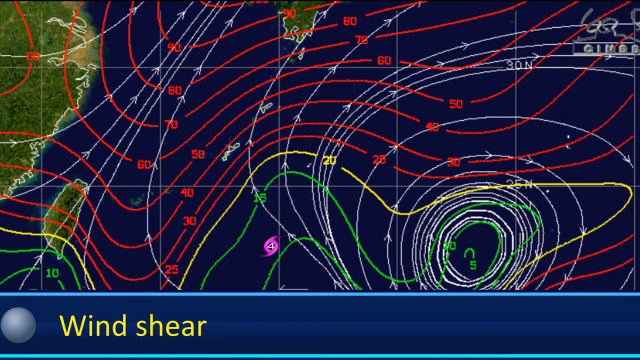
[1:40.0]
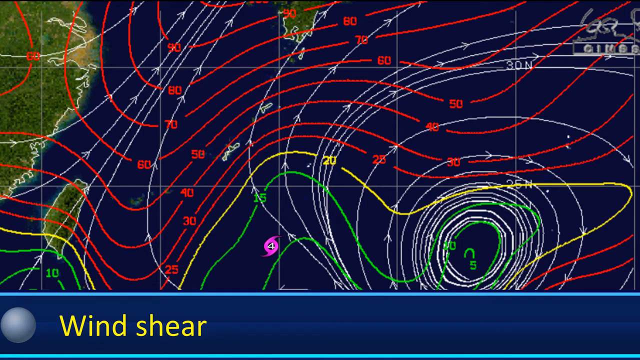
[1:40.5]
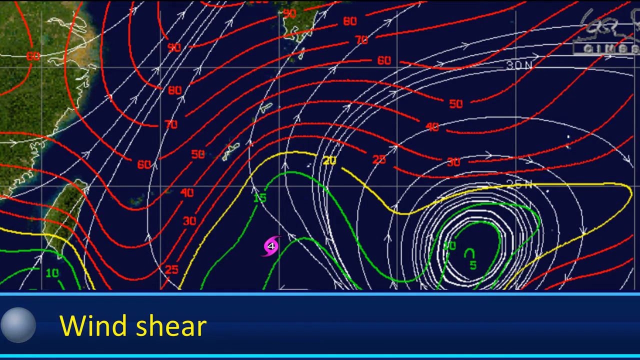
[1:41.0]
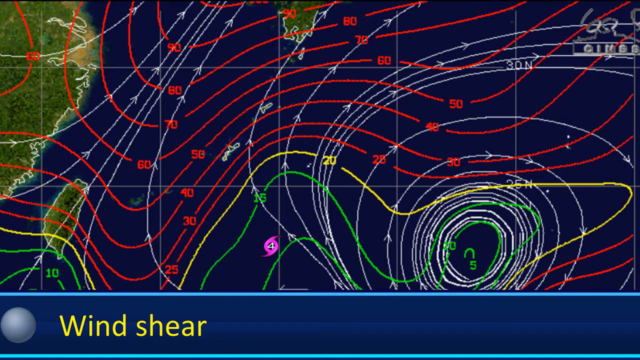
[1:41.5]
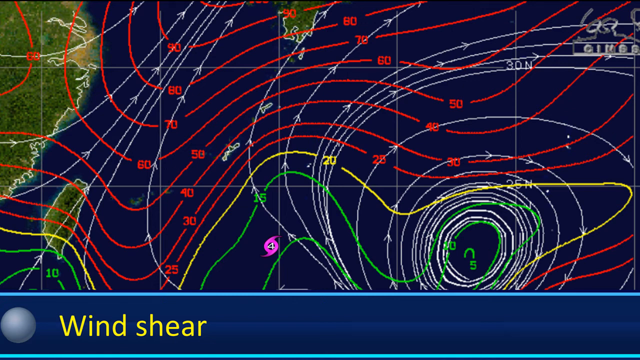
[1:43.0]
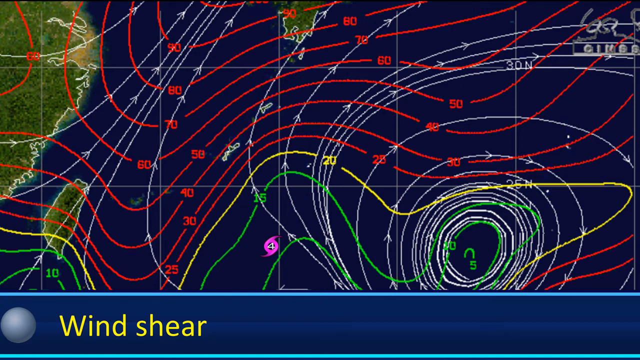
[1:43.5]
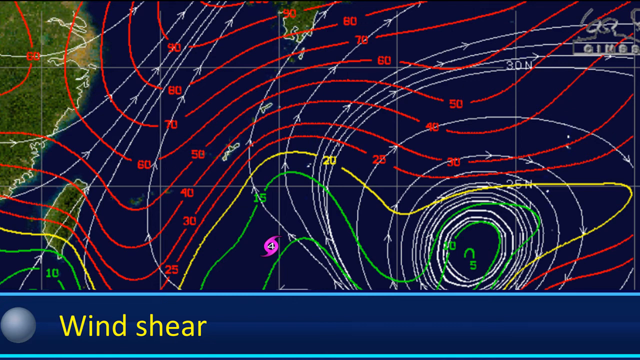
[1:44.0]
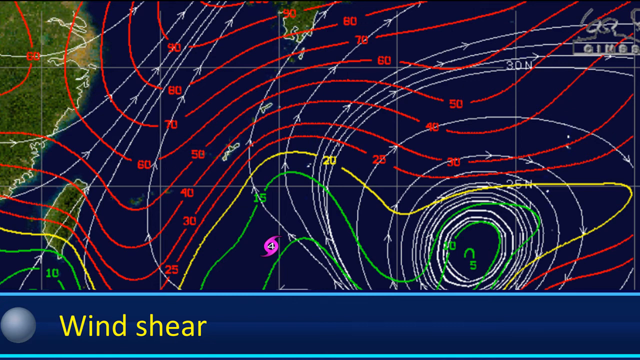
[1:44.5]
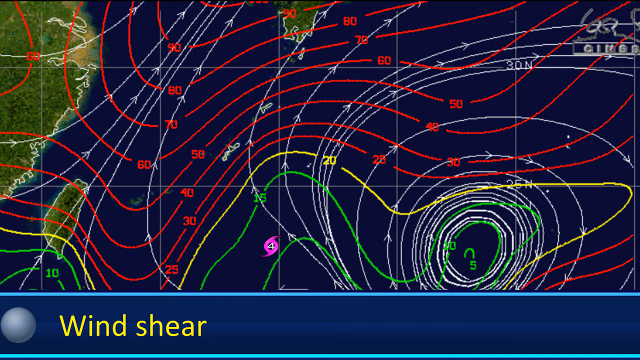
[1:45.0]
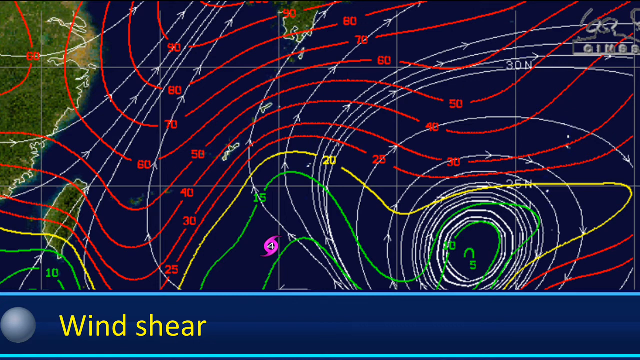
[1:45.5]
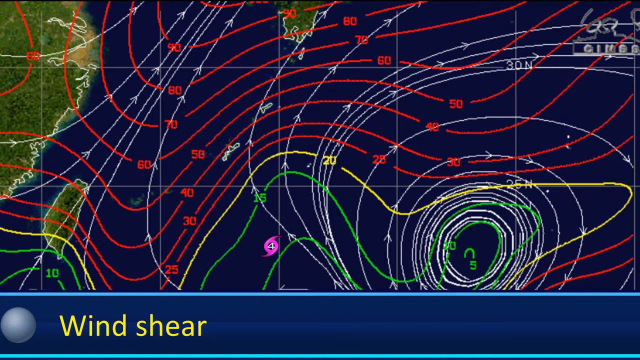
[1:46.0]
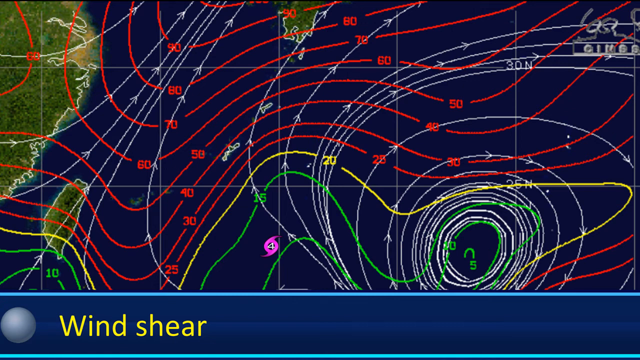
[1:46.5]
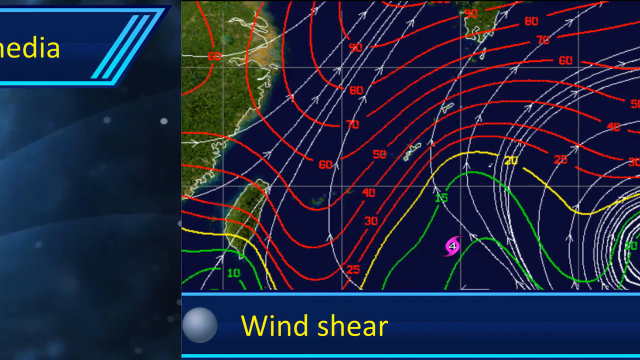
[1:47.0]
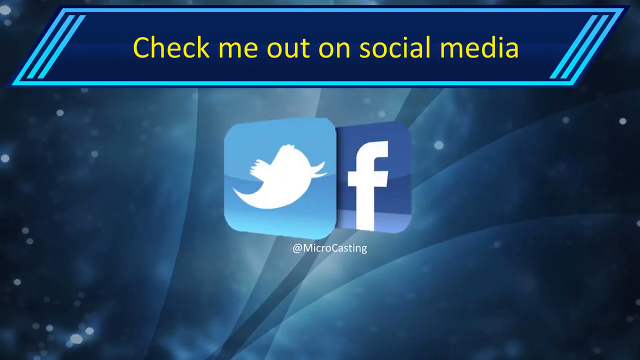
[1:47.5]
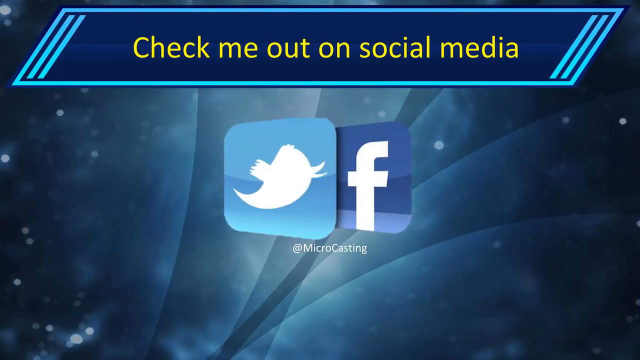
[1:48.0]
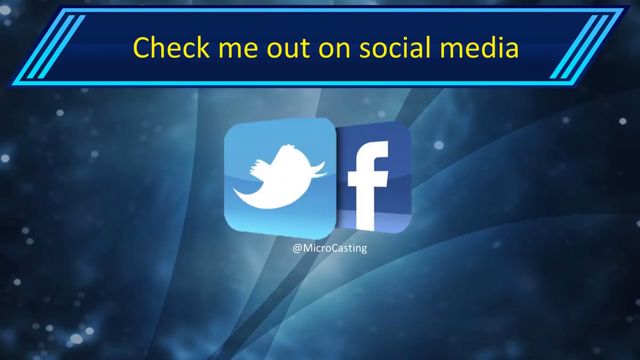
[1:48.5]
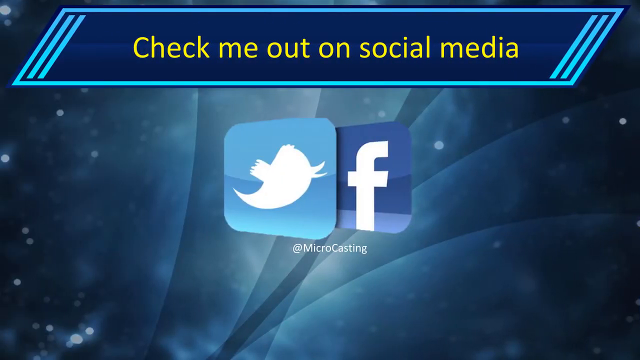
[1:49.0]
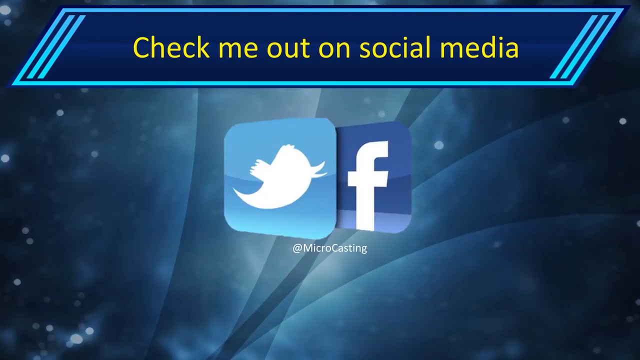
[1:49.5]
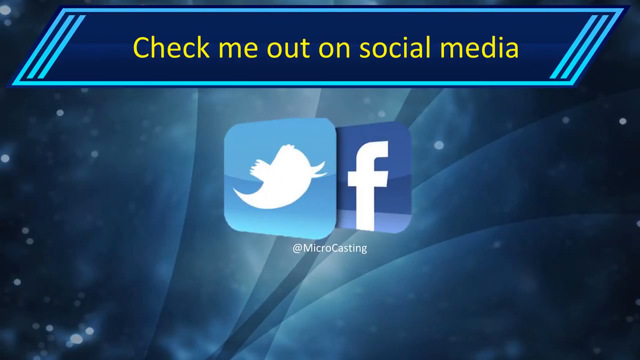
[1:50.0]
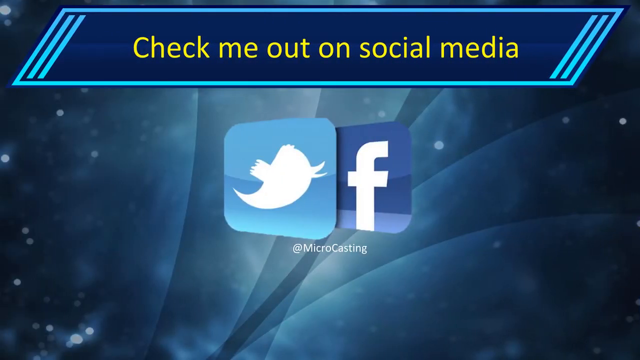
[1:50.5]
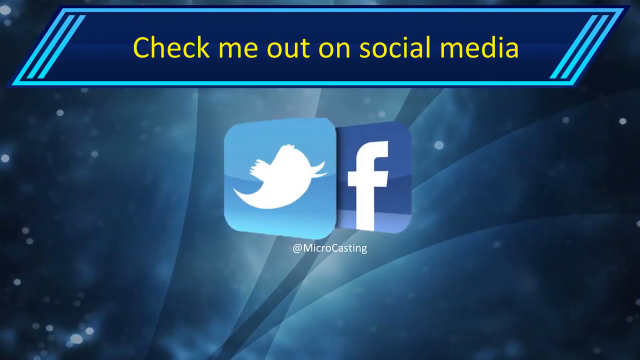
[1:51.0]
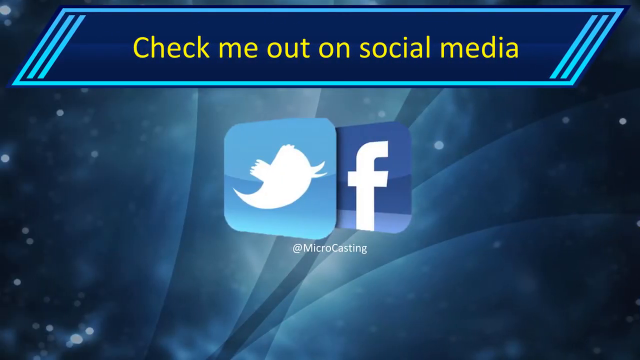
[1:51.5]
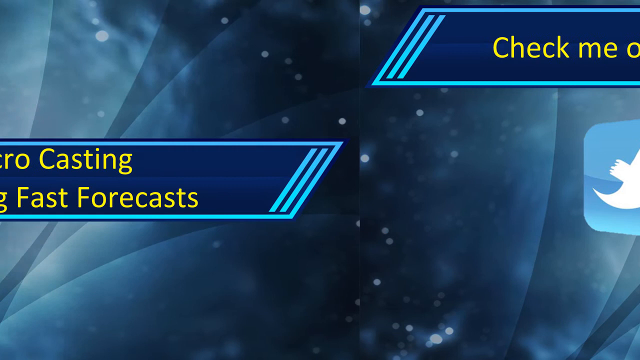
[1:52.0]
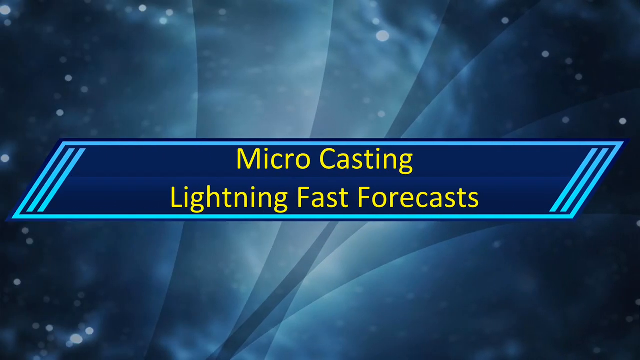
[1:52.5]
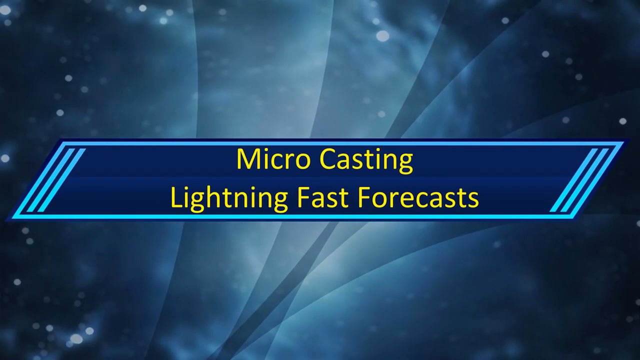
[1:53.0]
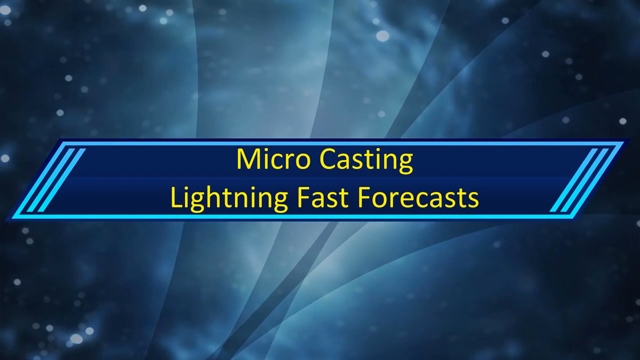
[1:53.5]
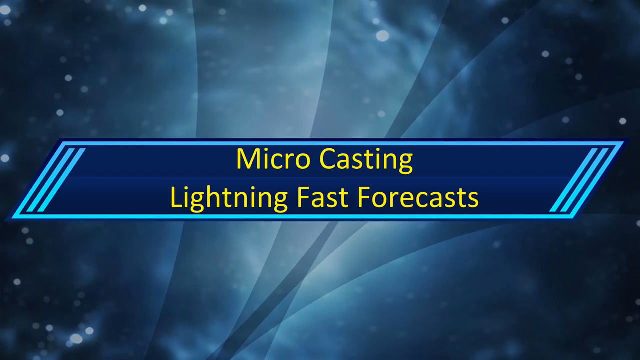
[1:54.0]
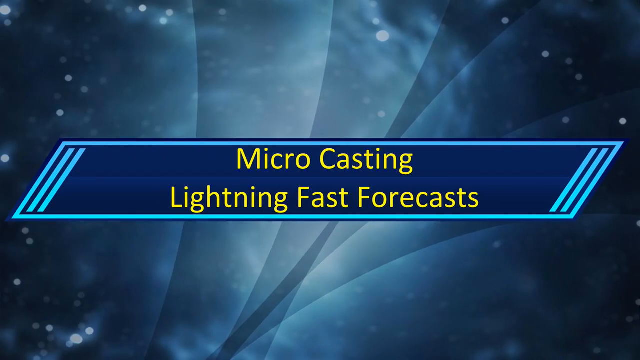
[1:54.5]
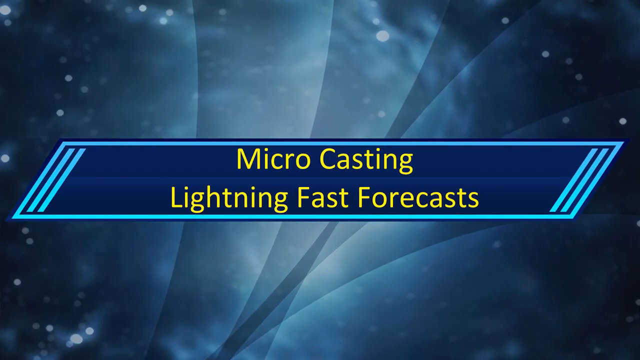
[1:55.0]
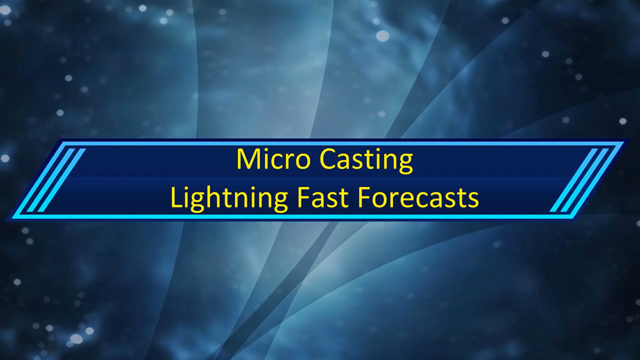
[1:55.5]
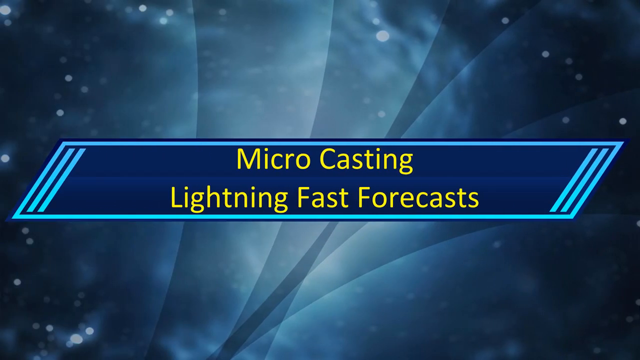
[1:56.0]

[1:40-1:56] The wind shear screen shows lines indicating the storm, where it is located, its movement directions and other statistics. The screen slides to the right to a new image: the blue space background with some lines on it. At the top is the slanted blue bar with a light blue outline and the words "check me out on social media" in yellow text. Below that, the Twitter and Facebook logos, their app icons, appear in the center of the screen, with white text underneath reading "at microcasting". The screen slides to the right again to the space background with the slanted blue bar in the center and the text "microcasting lightning fast forecasts" in yellow, which stays on screen until the end.